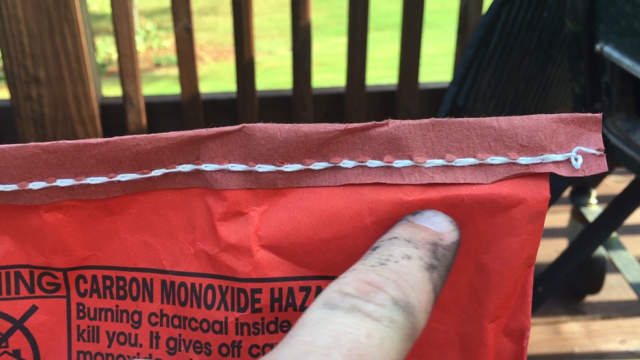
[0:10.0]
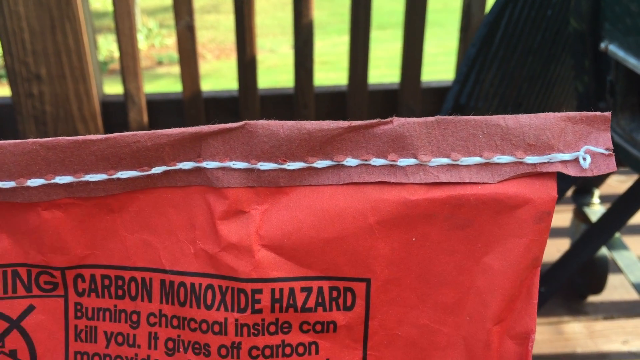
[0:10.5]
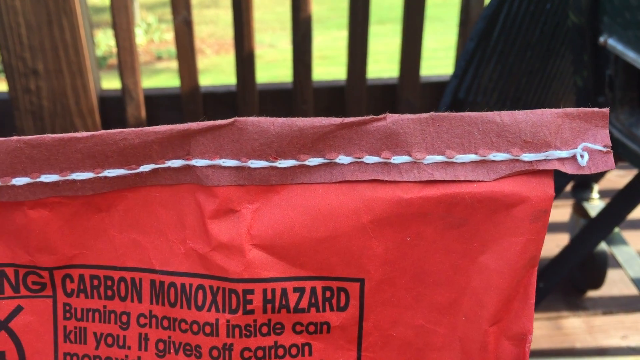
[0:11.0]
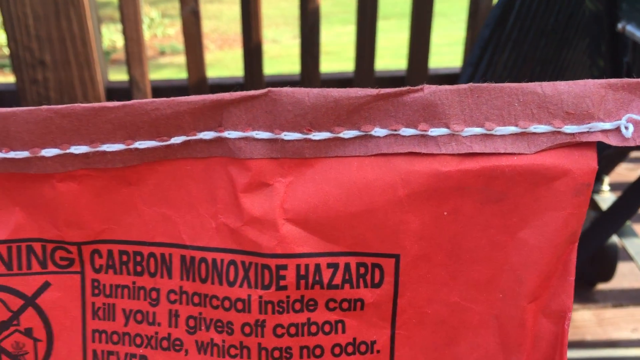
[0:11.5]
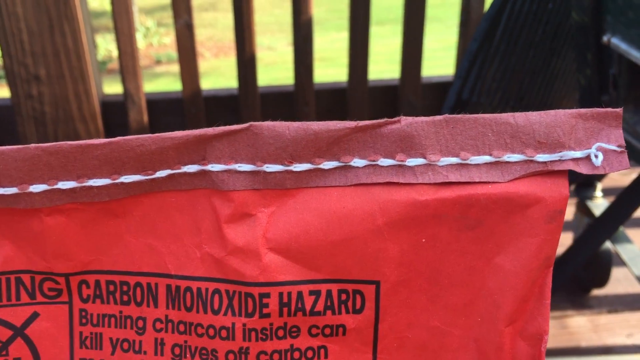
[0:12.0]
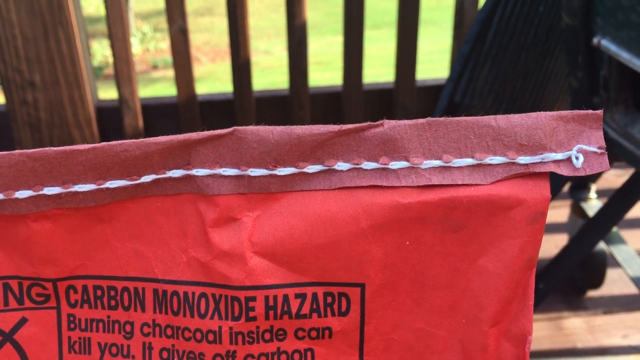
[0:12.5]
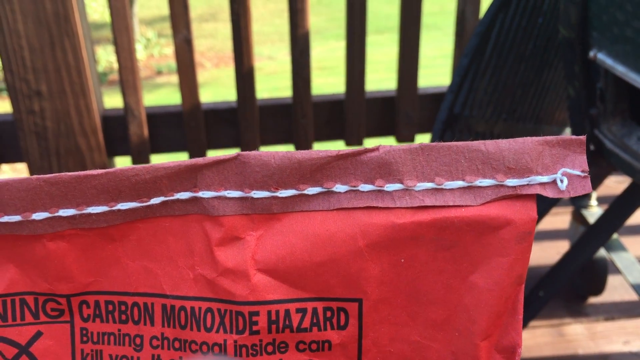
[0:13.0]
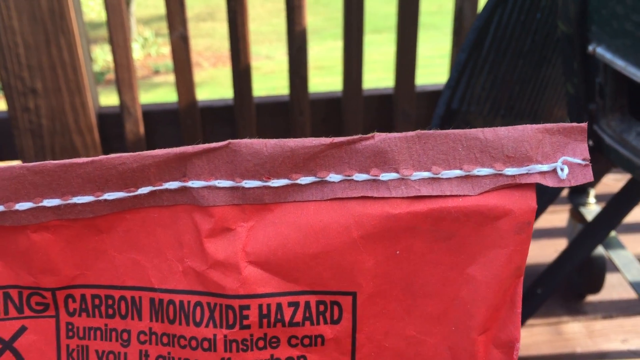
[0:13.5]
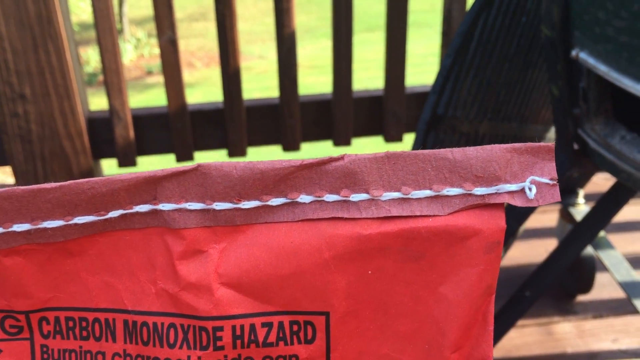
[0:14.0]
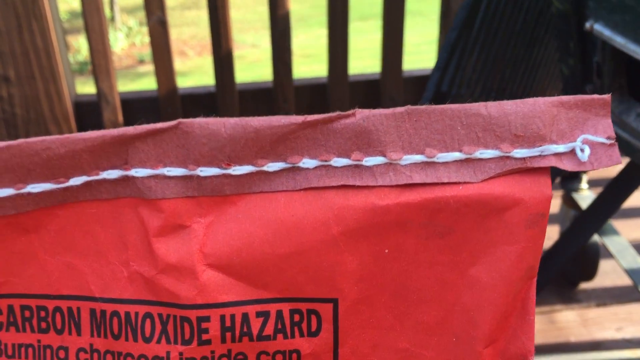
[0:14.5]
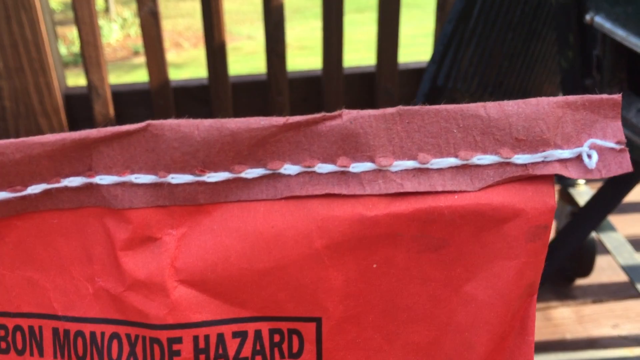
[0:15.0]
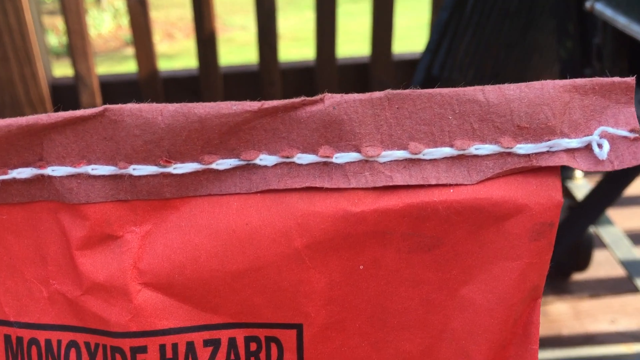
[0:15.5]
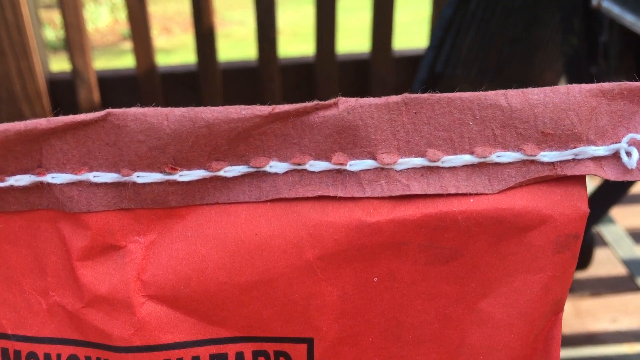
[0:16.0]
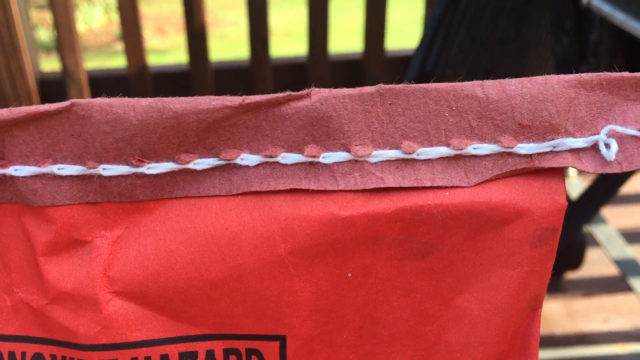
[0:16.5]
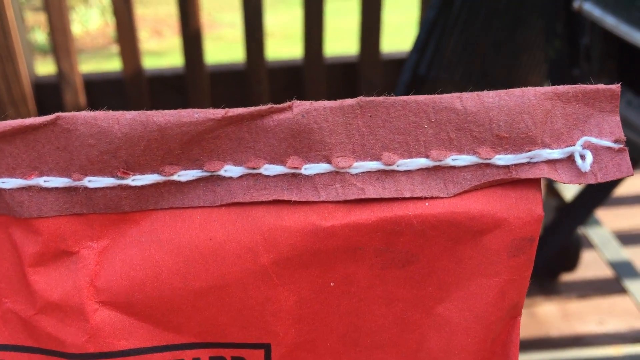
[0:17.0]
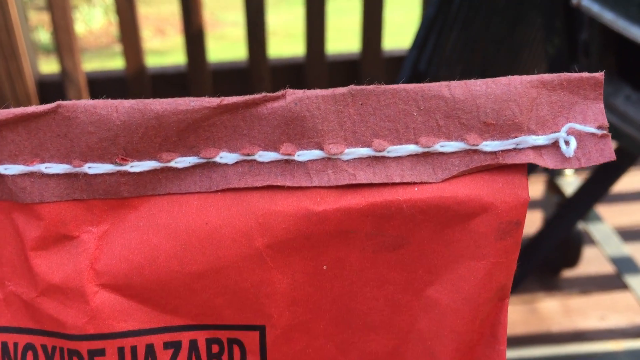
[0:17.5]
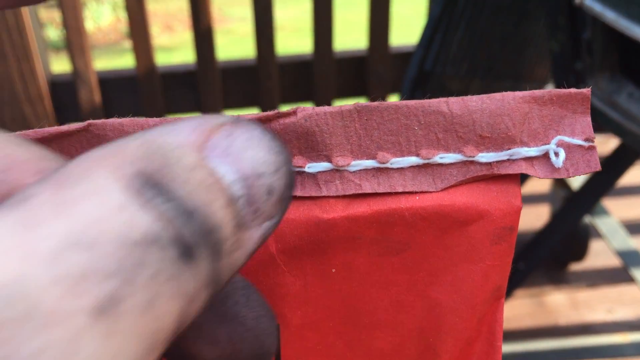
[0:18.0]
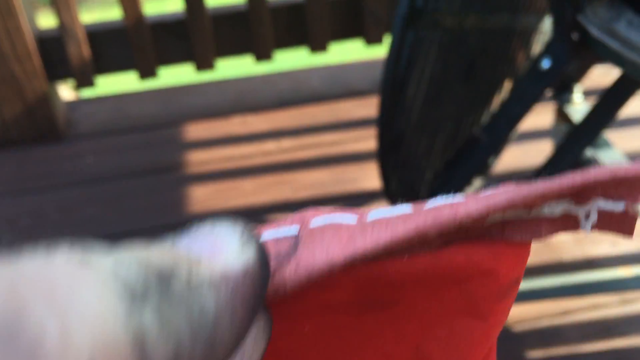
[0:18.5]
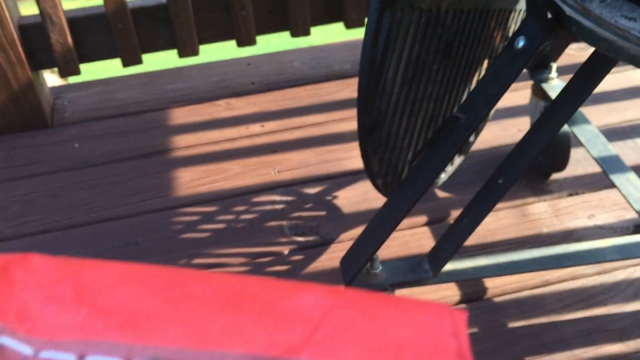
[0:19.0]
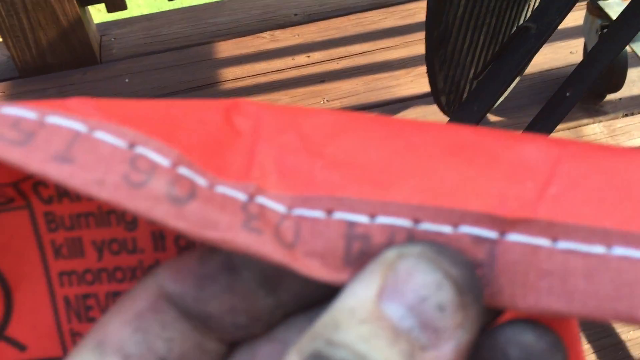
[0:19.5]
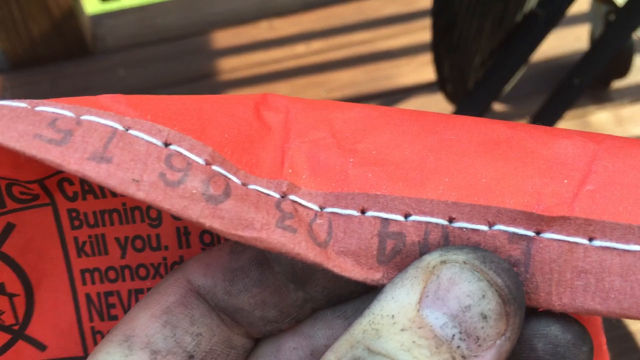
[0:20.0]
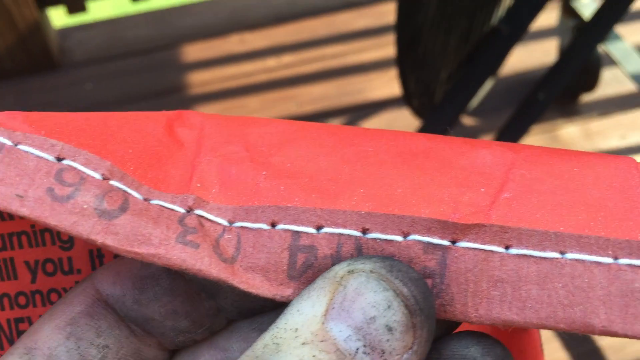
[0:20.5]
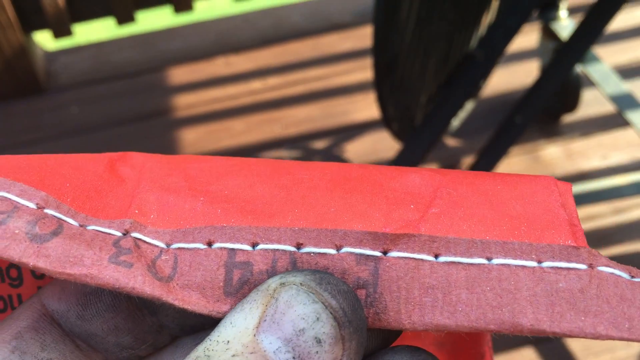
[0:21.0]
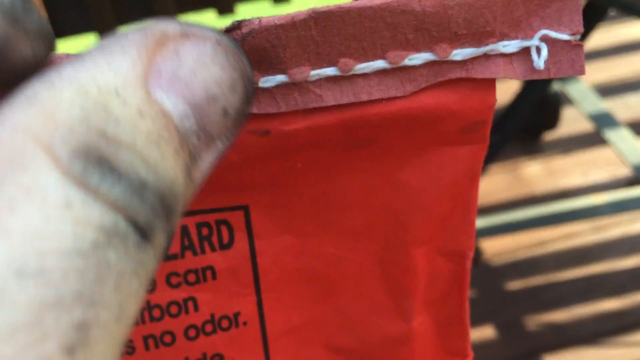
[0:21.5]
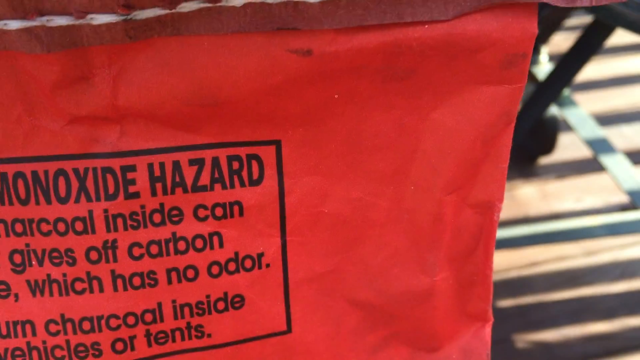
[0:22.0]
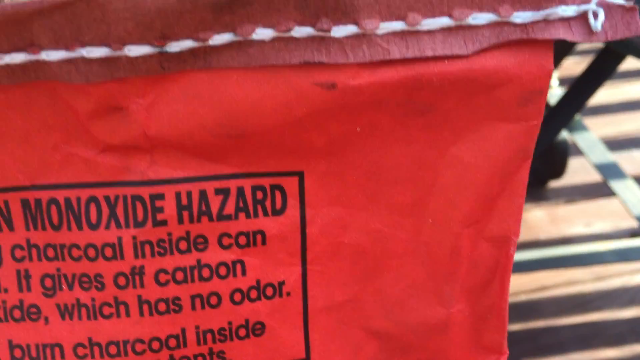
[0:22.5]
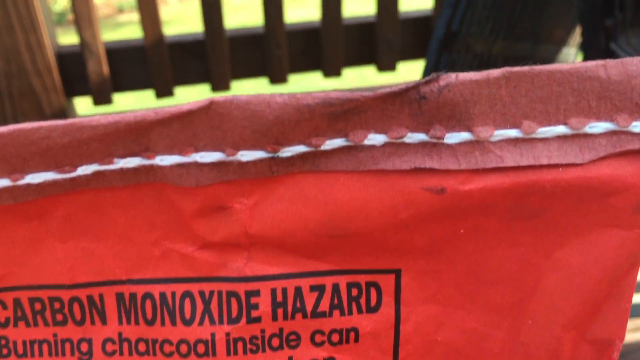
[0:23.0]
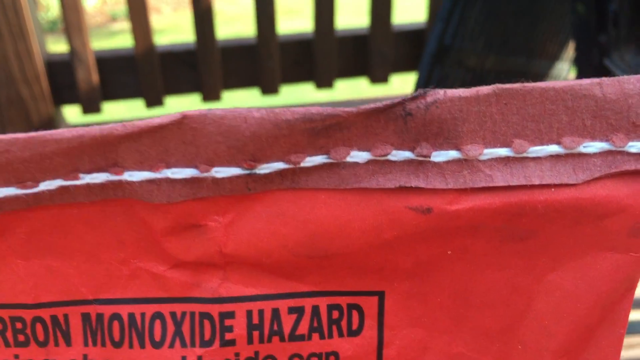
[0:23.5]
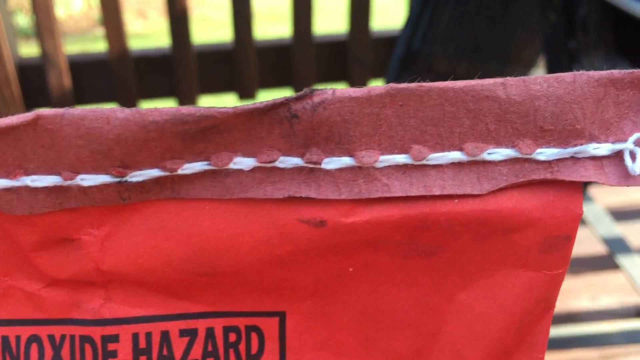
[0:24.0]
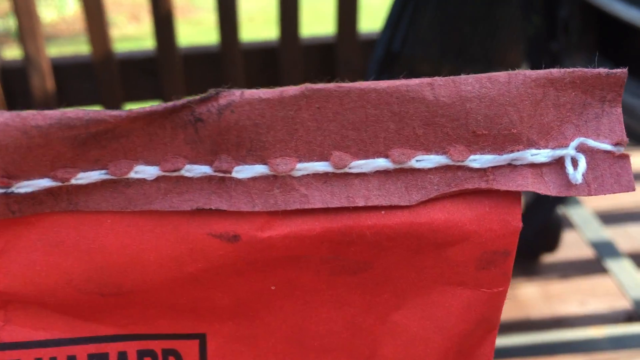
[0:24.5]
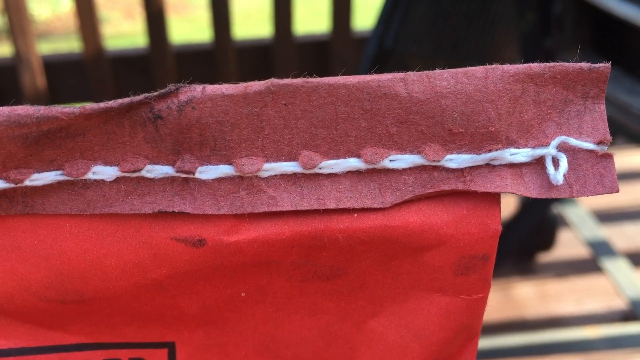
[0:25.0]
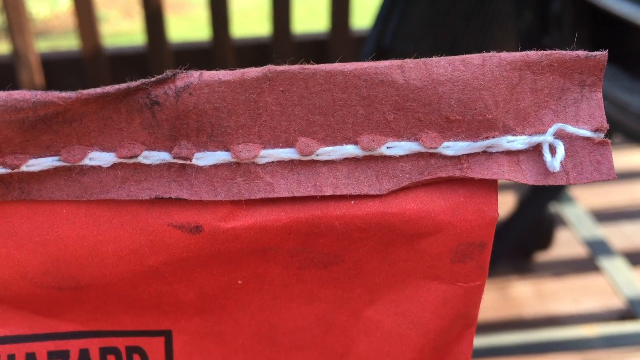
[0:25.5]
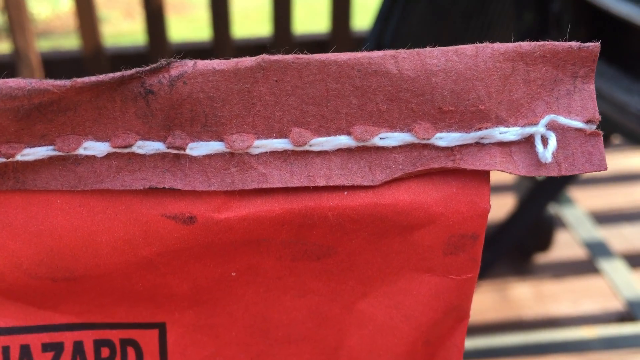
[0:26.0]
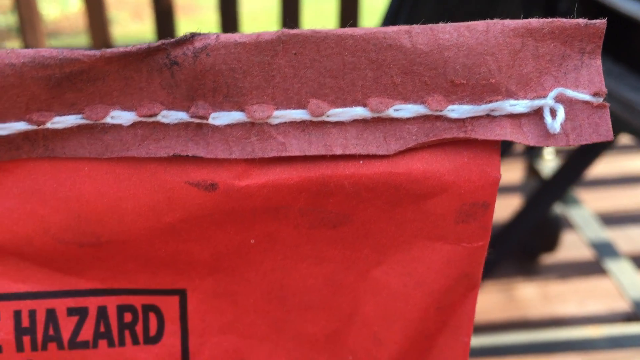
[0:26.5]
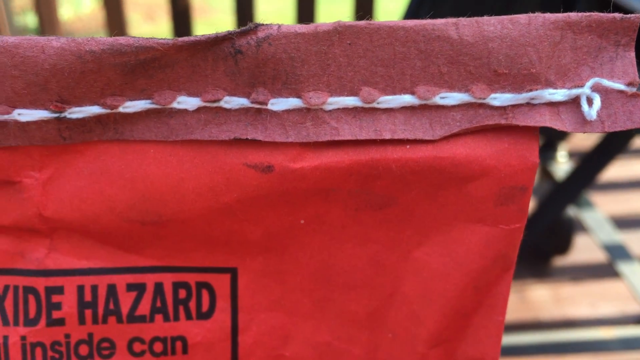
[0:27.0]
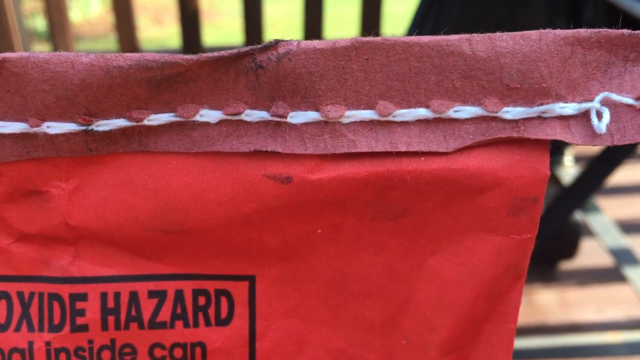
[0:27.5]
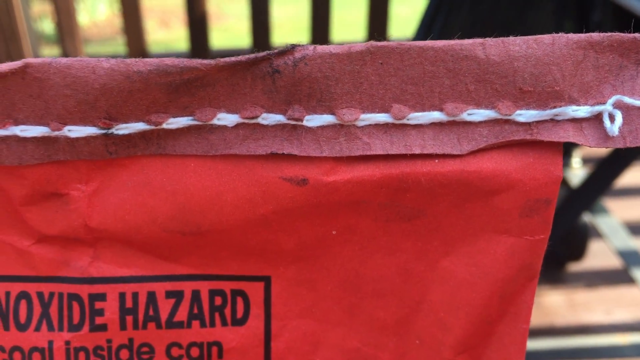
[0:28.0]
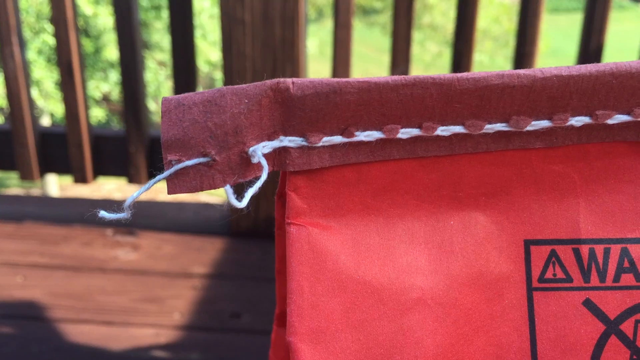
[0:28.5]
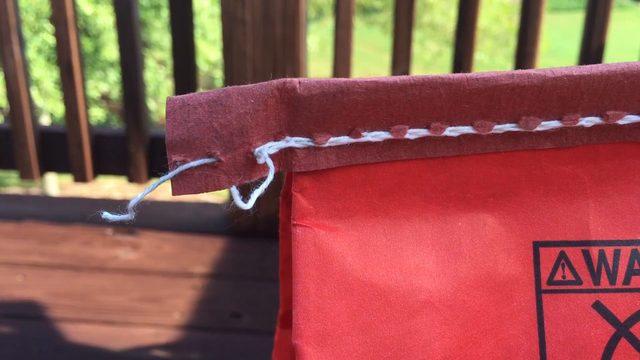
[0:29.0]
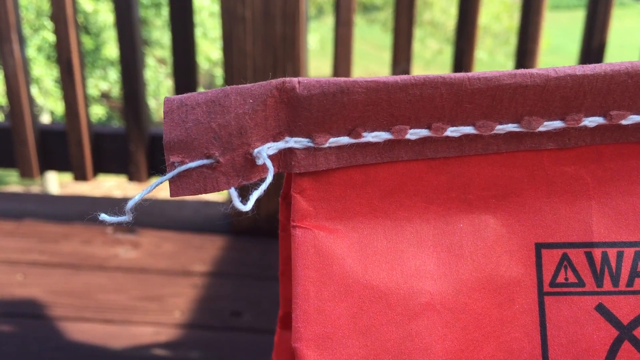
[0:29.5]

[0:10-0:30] The red and black bag remains in front of the camera as a person tries to open it. The person's hands are black at the fingers, so the bag apparently contains charcoal. The background is still not clear, but woodwork is visible, possibly the front porch of a house. On the right, a small part of a black chair appears.